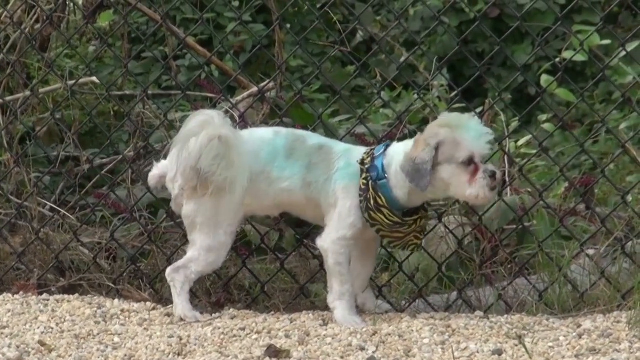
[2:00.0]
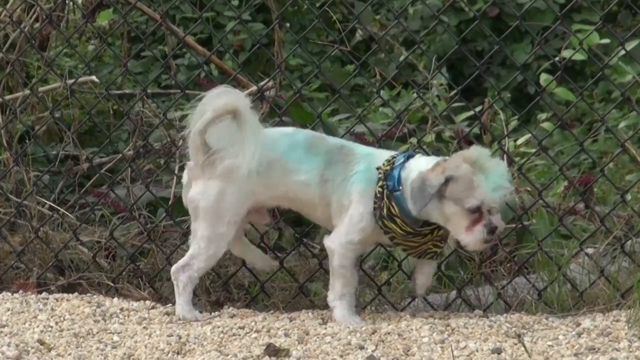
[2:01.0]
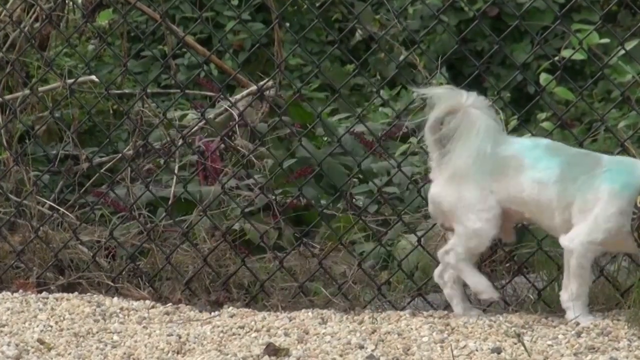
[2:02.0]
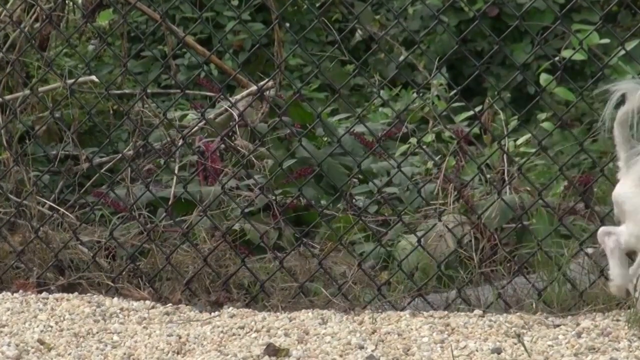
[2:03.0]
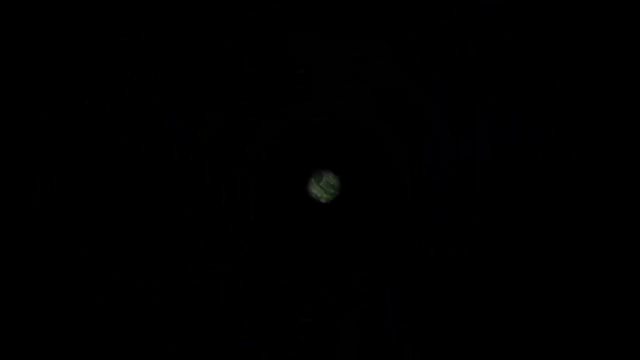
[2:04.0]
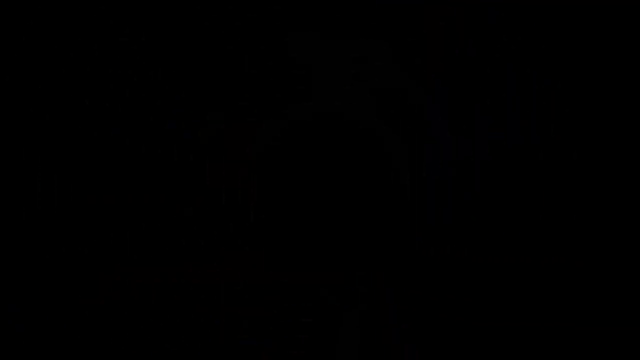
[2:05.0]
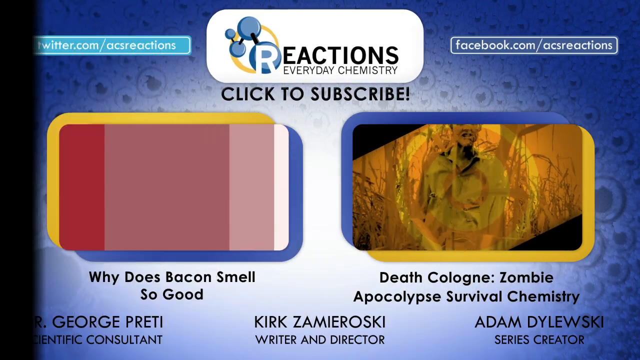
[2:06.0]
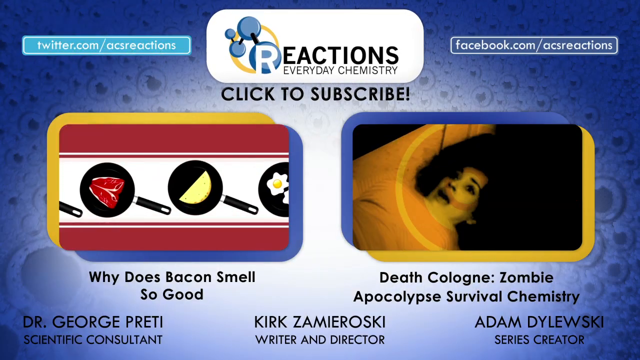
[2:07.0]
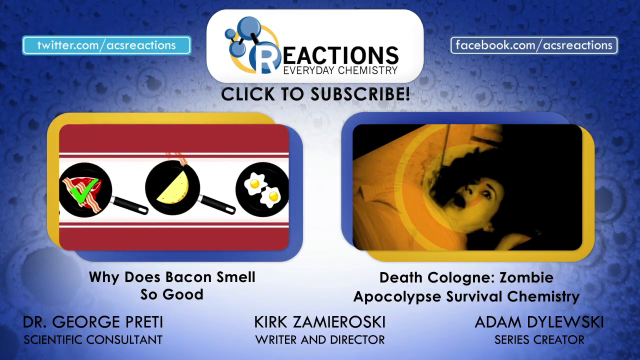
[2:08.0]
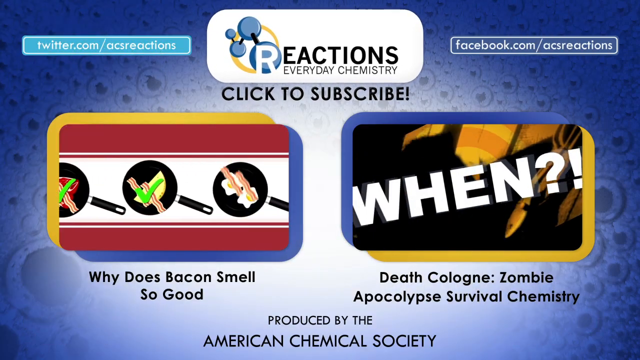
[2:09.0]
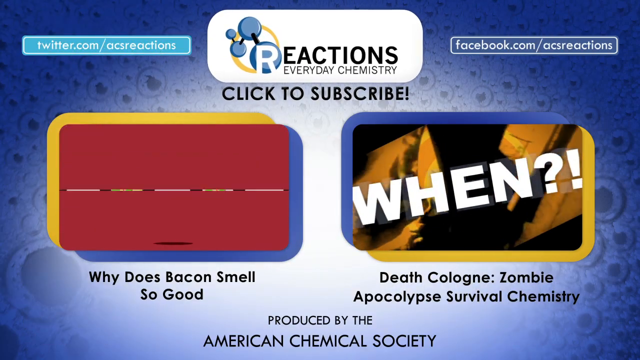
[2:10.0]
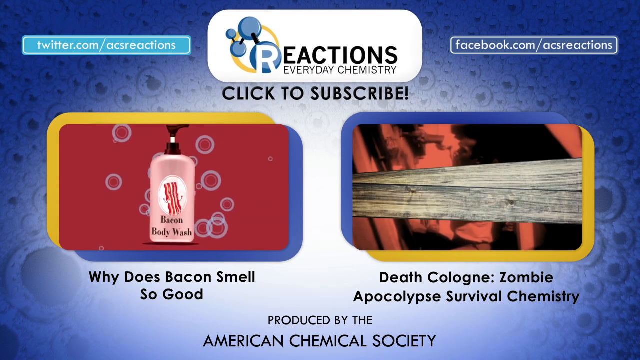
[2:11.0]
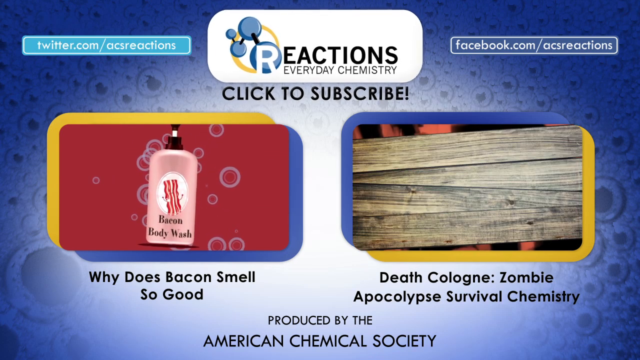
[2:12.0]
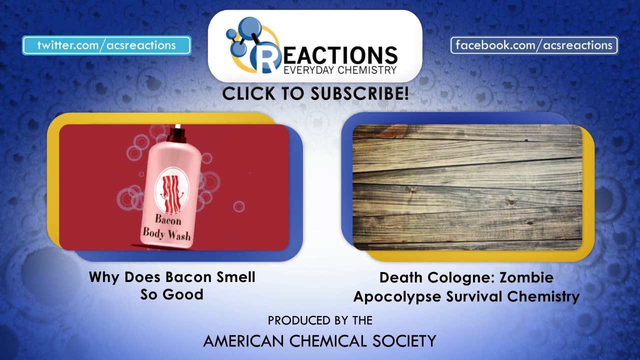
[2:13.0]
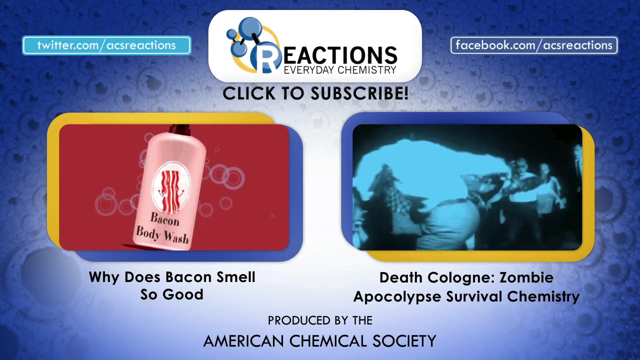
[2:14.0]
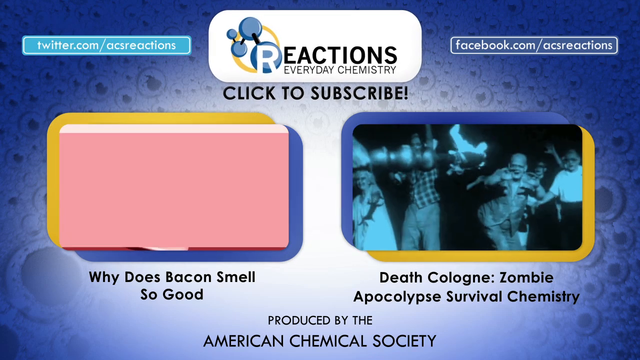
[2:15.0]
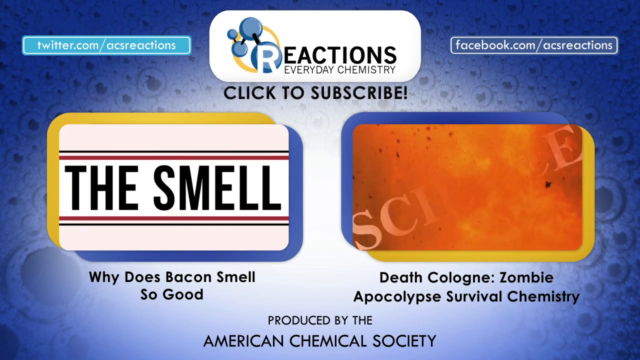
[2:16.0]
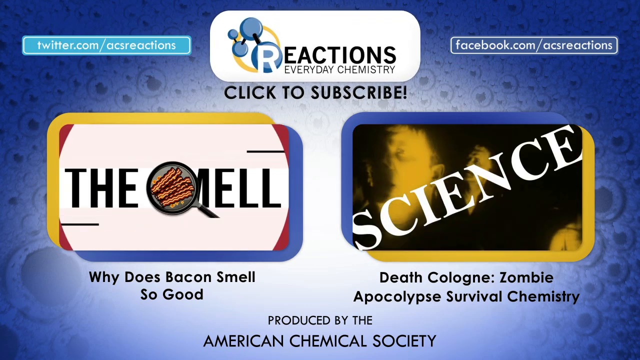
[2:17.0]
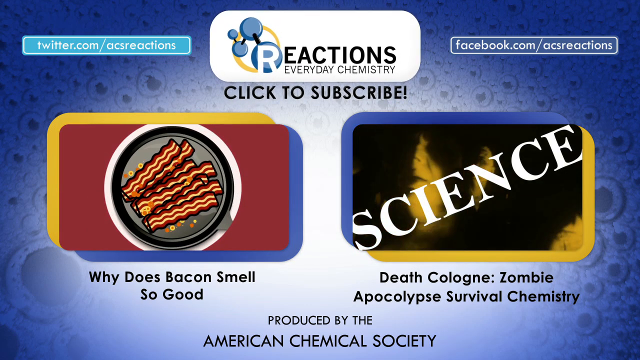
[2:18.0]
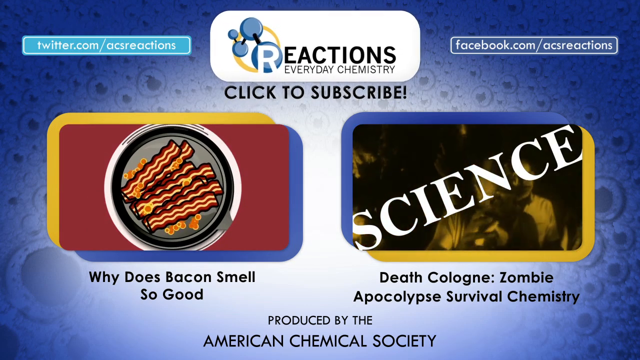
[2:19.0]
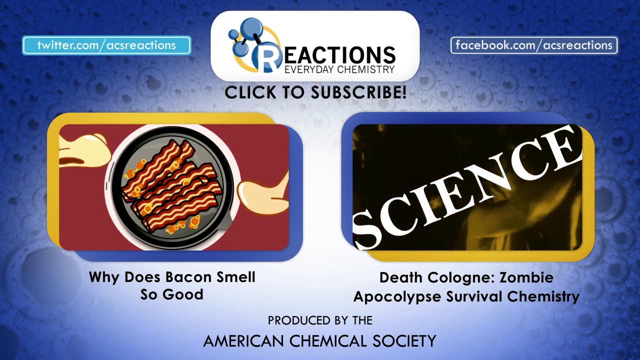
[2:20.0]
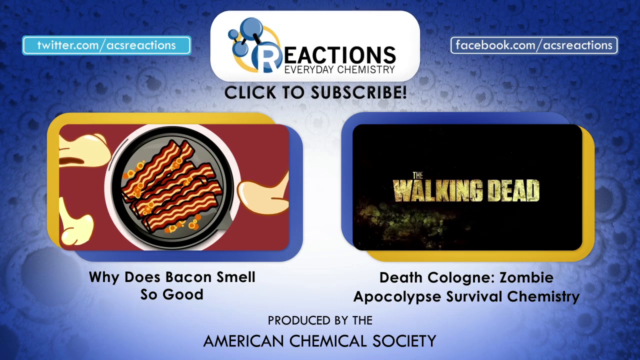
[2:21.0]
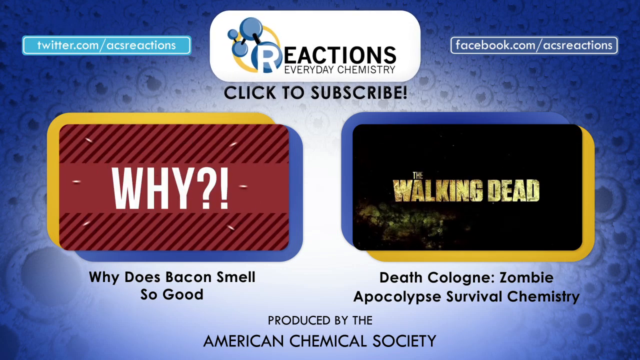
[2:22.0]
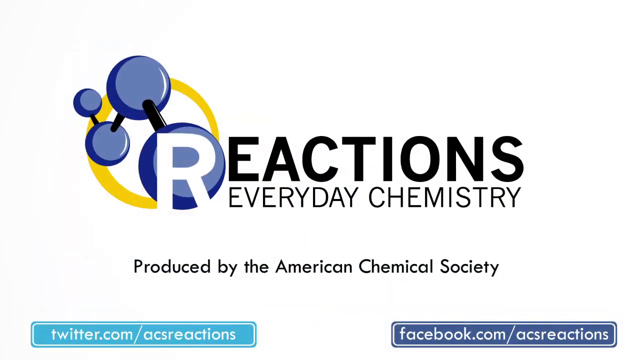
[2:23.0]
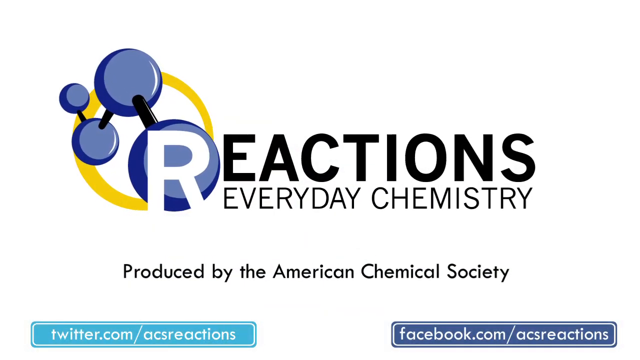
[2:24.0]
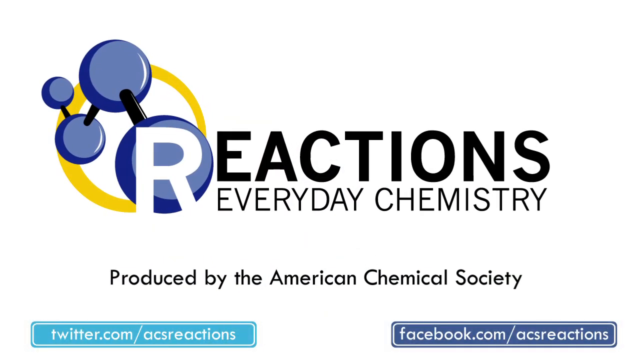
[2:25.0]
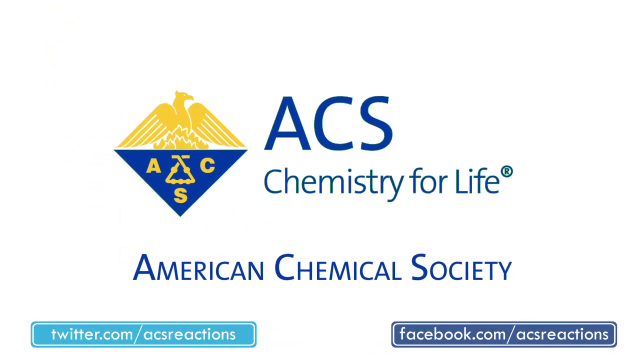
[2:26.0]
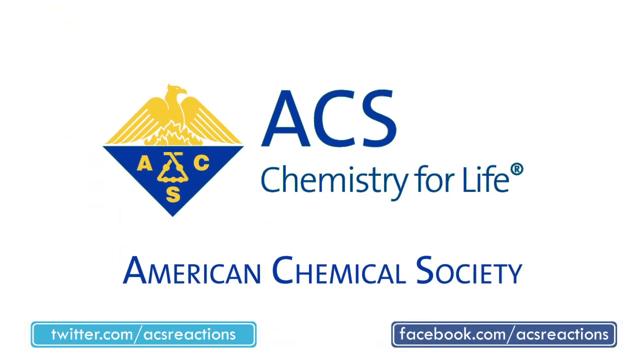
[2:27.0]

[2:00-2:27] A small white dog pees on a fence. The end screen shows the title "Reactions, Everyday Chemistry" with "click to subscribe" below it. Underneath are video cards promoting other videos from the channel, one of them titled "Why Does Bacon Smell So Good?" Social media handles linking to Facebook.com and Twitter.com follow, and then the name of the channel, which appears to be ACS Reactions.